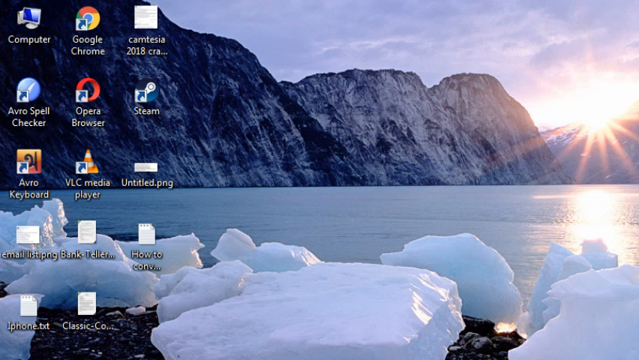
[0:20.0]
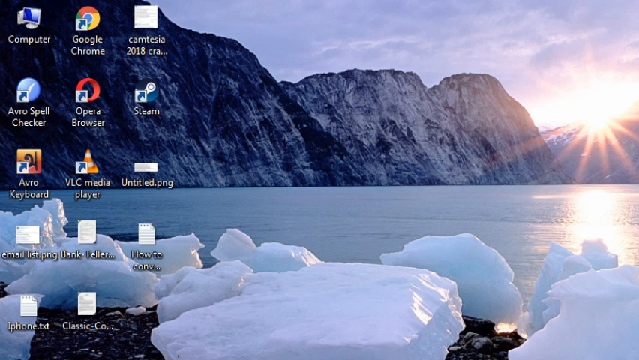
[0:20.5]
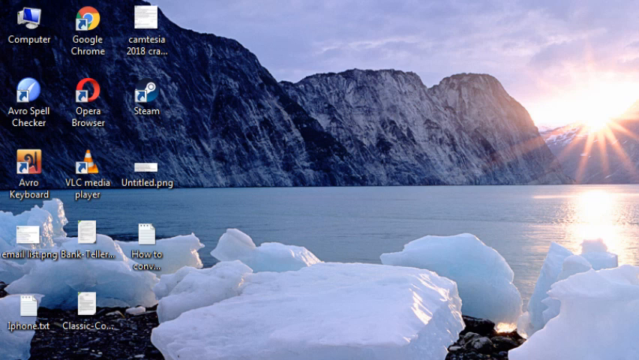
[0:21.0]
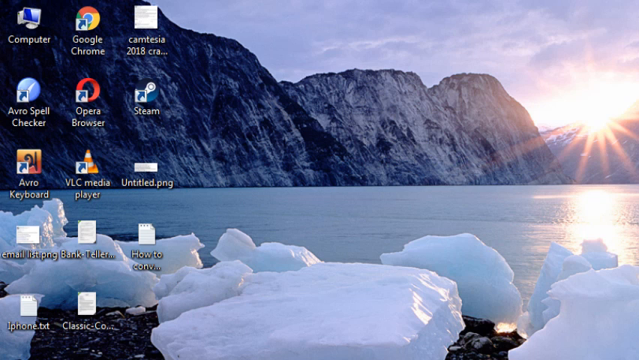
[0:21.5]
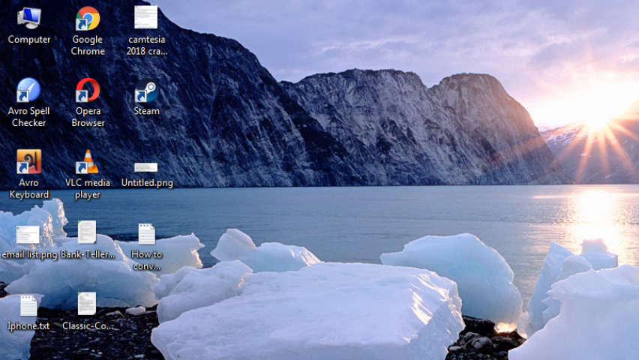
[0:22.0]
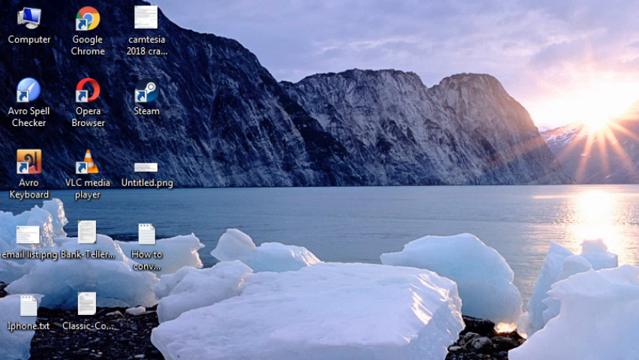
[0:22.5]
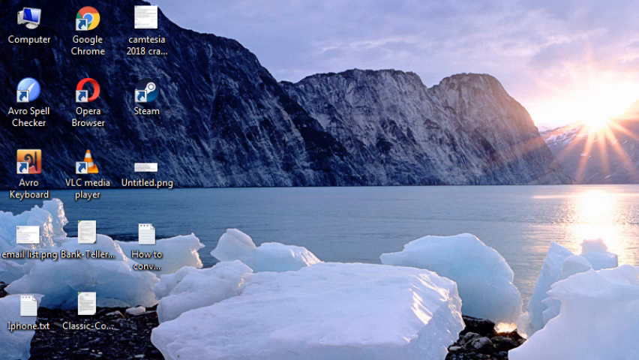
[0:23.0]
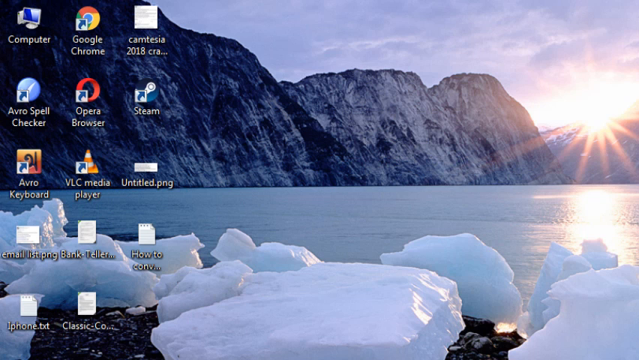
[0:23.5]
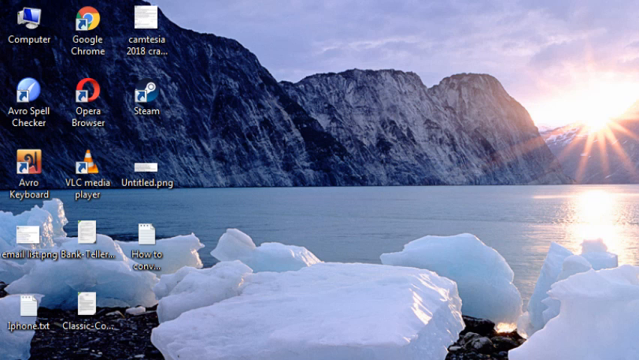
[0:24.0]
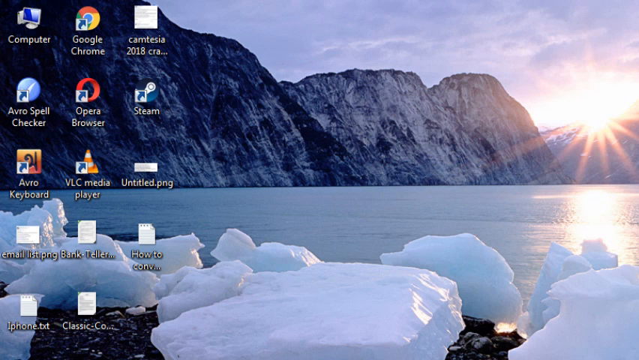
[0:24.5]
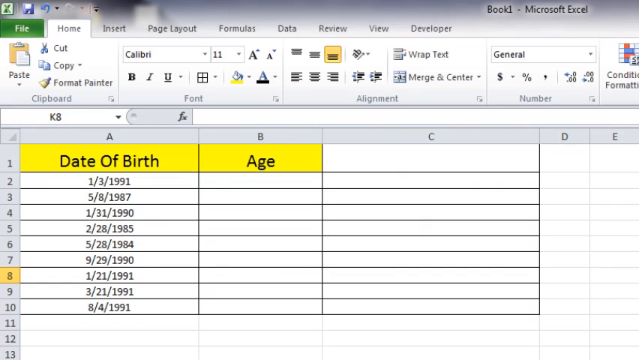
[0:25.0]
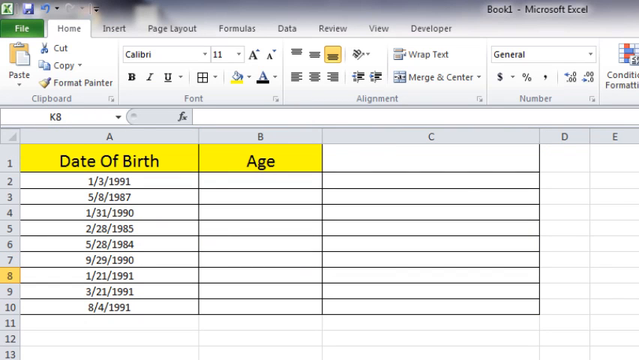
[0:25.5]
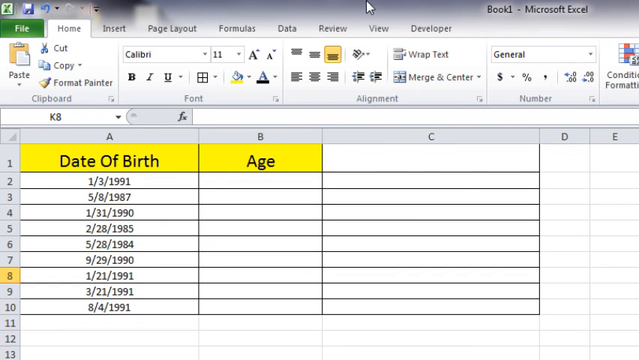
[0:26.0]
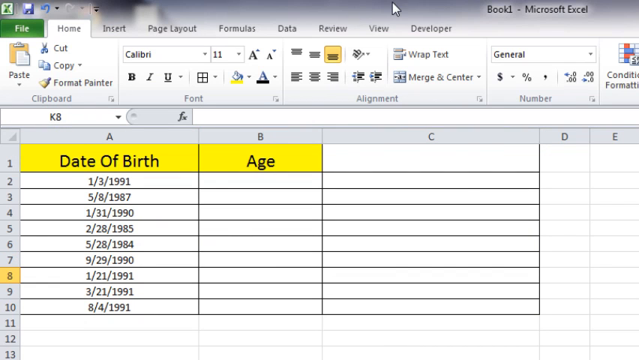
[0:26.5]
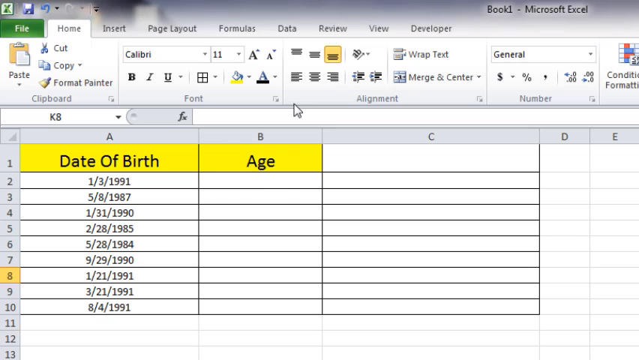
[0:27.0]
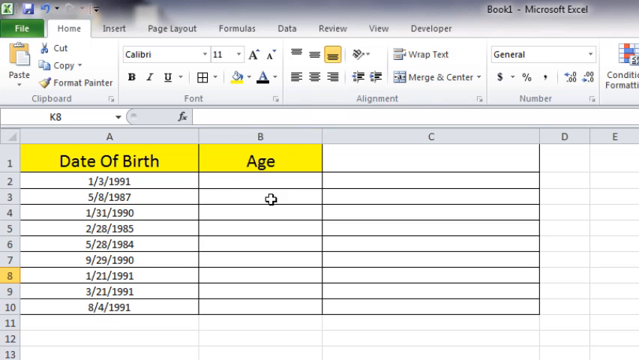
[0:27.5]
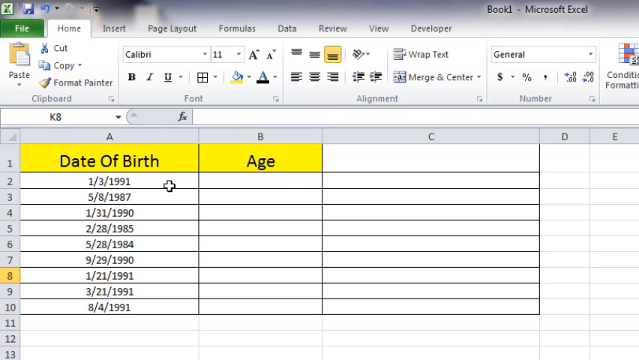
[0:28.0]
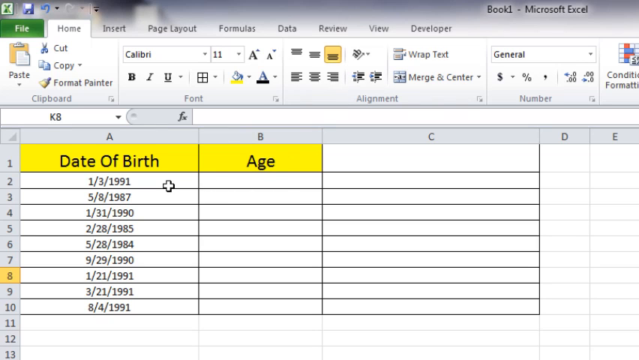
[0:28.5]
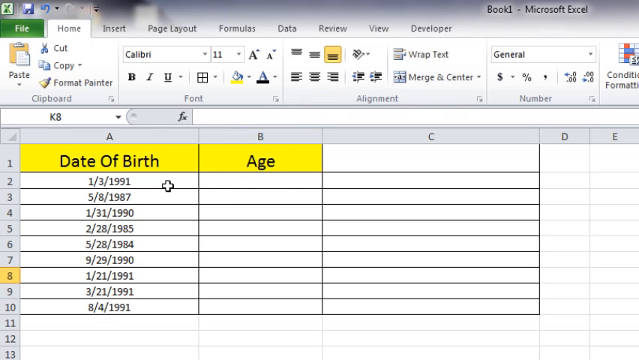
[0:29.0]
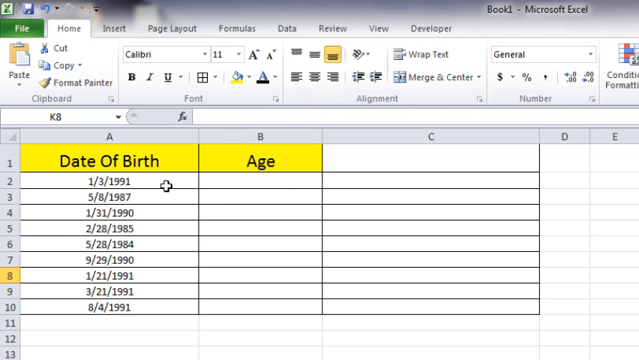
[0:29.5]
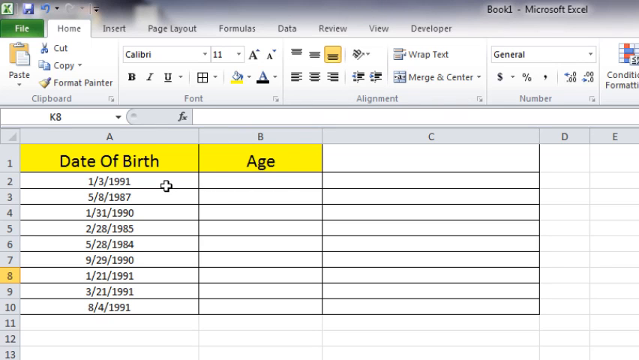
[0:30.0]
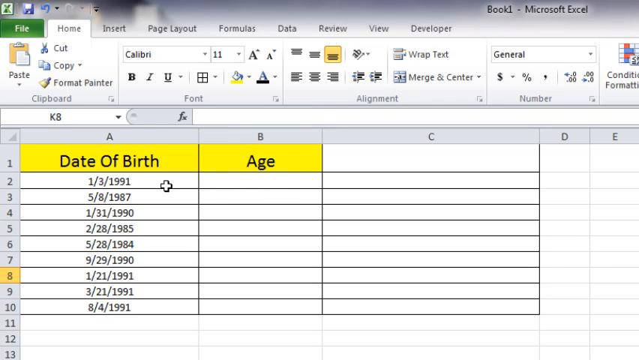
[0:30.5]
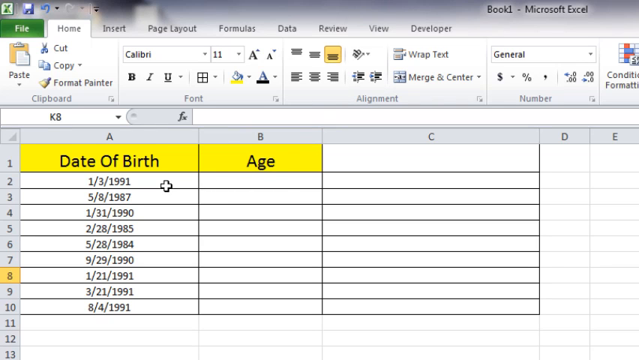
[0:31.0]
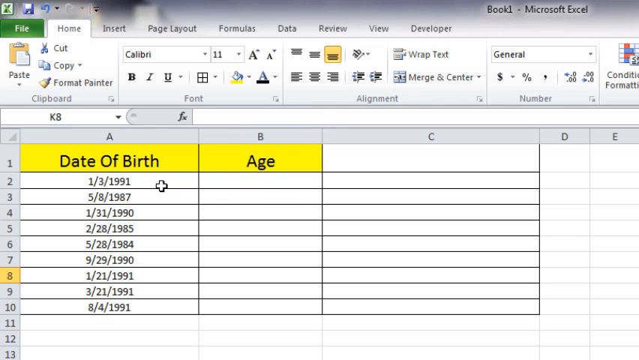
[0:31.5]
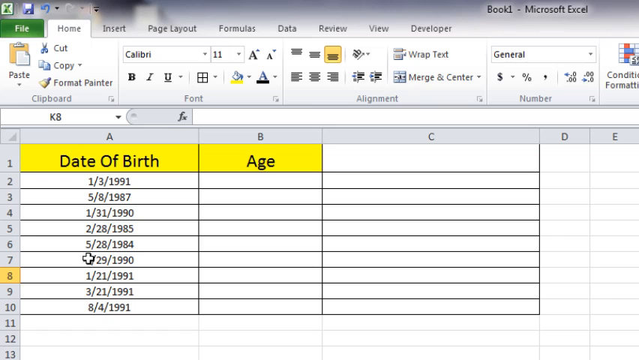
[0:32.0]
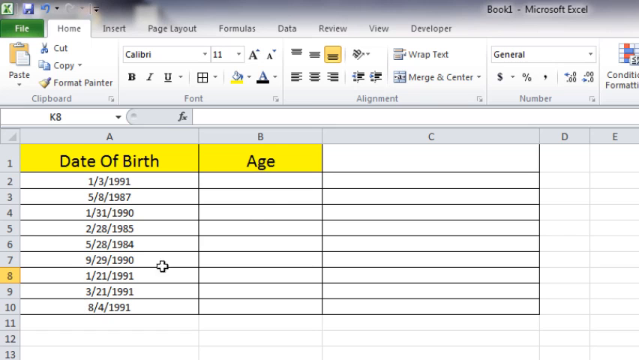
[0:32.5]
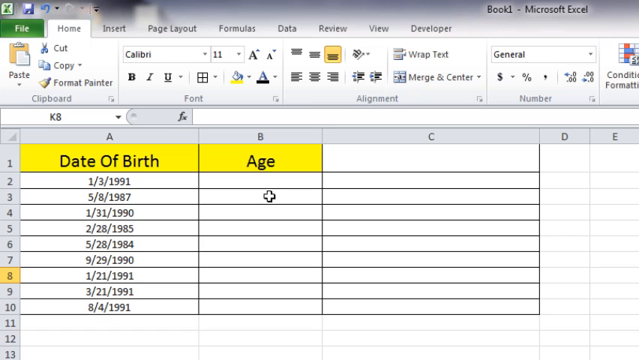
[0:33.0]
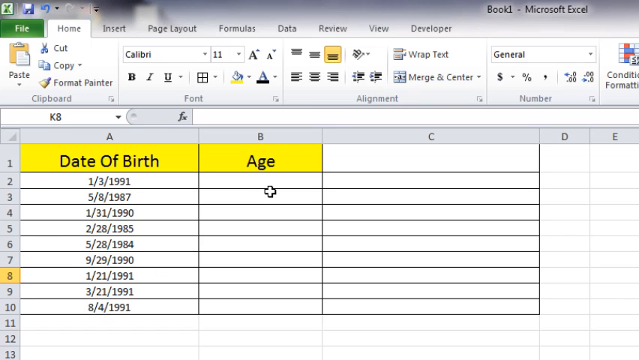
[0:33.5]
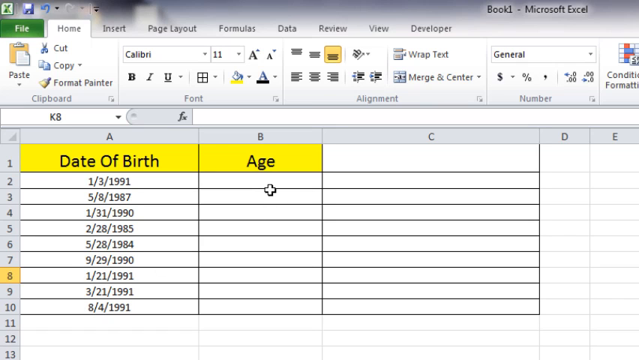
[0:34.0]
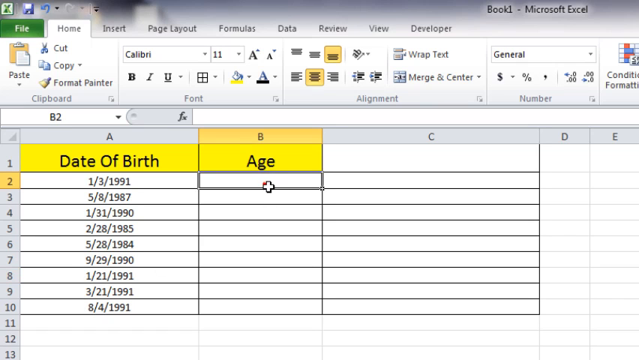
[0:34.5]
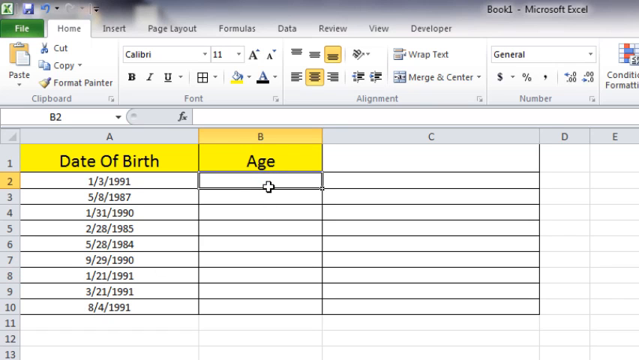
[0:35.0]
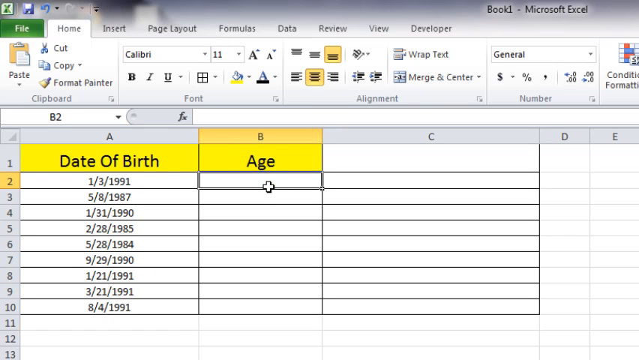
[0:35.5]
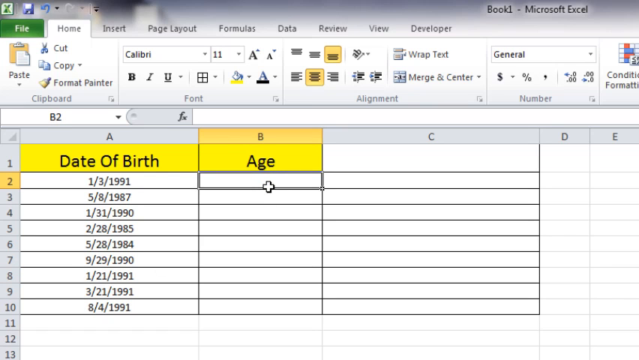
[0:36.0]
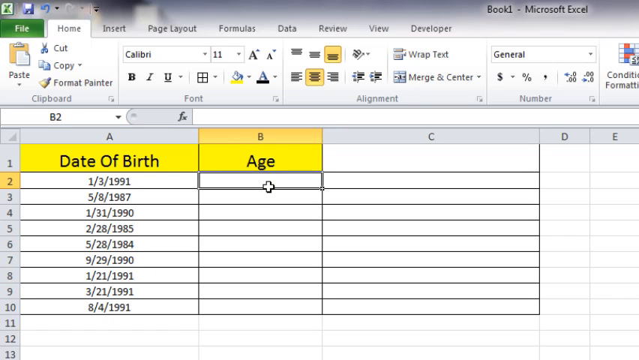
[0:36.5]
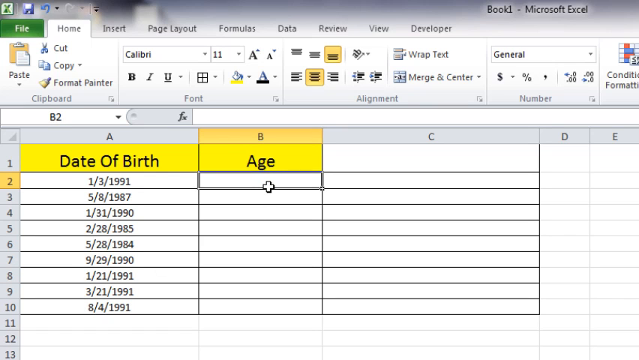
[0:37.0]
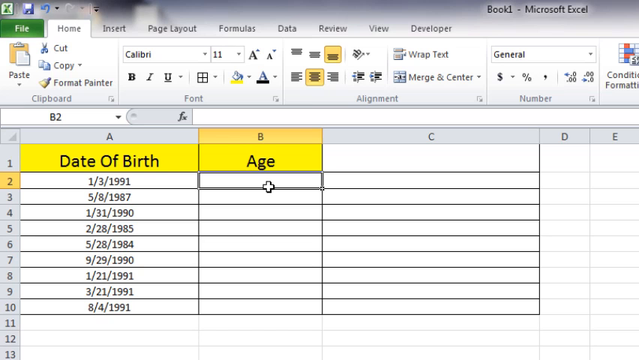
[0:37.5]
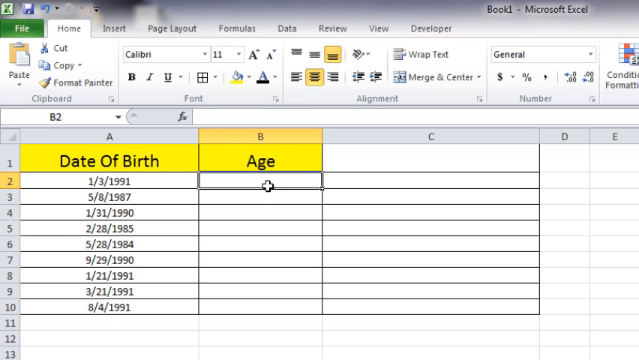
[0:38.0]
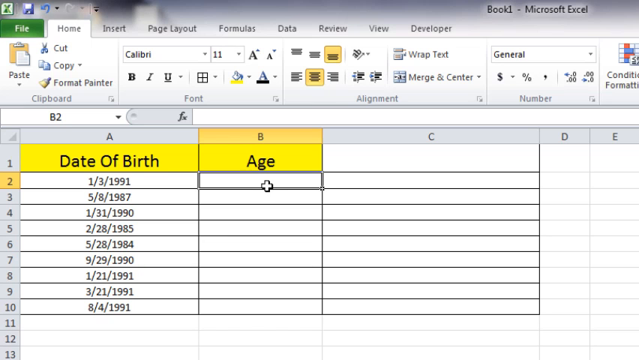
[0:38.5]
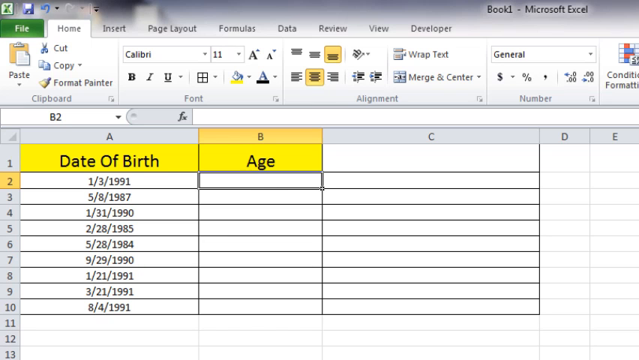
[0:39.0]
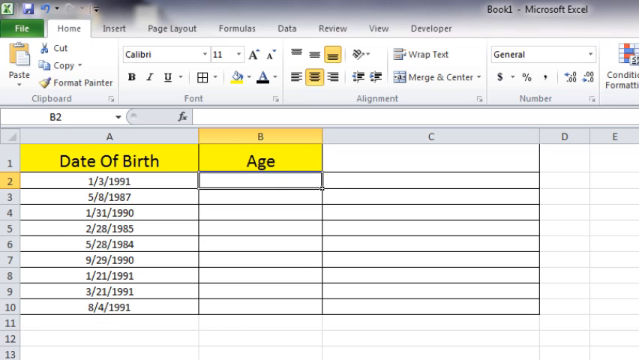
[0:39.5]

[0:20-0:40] Apparently about half of this stretch still shows the desktop background. Then an Excel spreadsheet titled "book one" appears. Starting from A1, date of birth runs down column A, with a number of dates already listed, ranging from about 1984 to 1991. The age column, column B, is completely empty. The header row is highlighted yellow where the labels for date of birth and age are. The cursor moves around and clicks into B2, the first empty row.